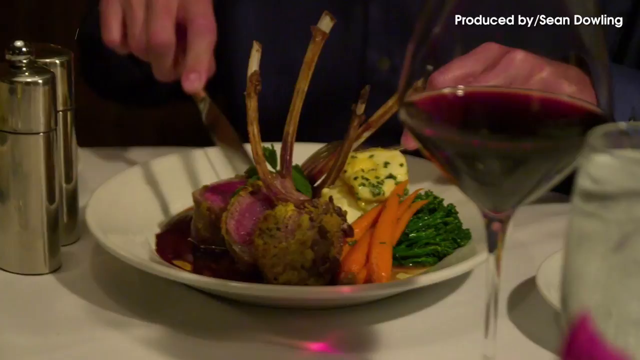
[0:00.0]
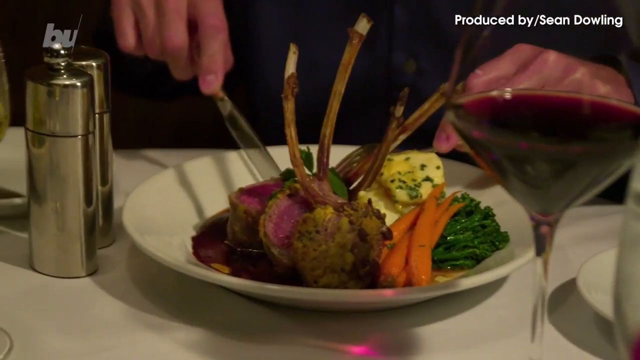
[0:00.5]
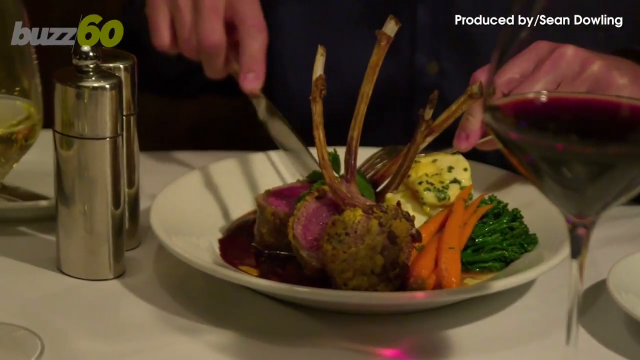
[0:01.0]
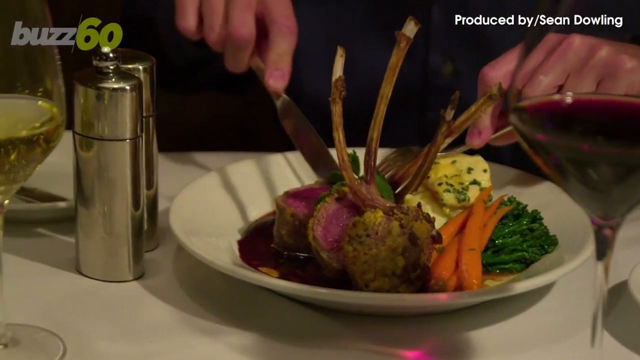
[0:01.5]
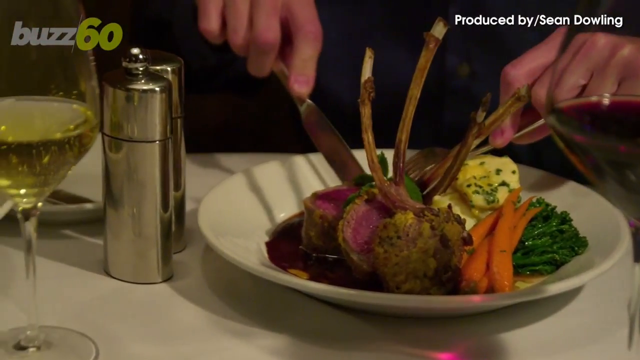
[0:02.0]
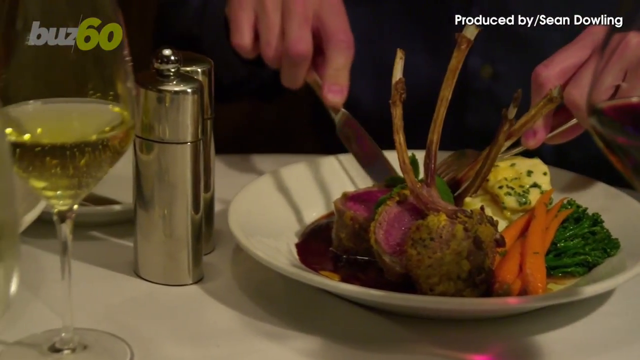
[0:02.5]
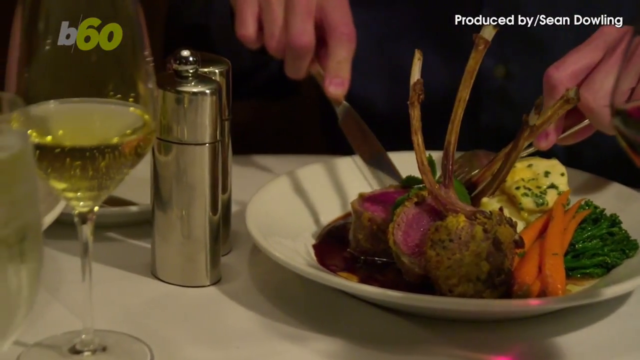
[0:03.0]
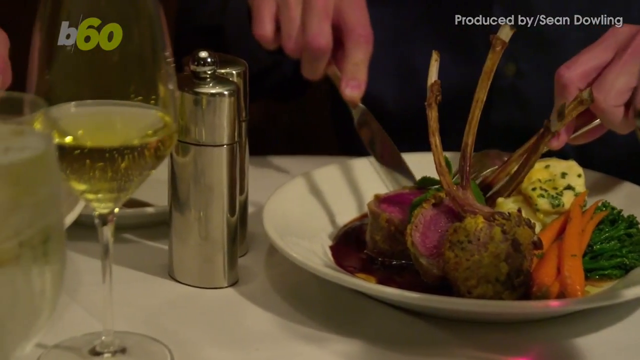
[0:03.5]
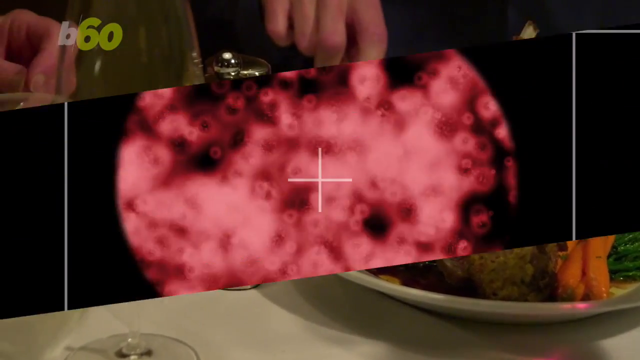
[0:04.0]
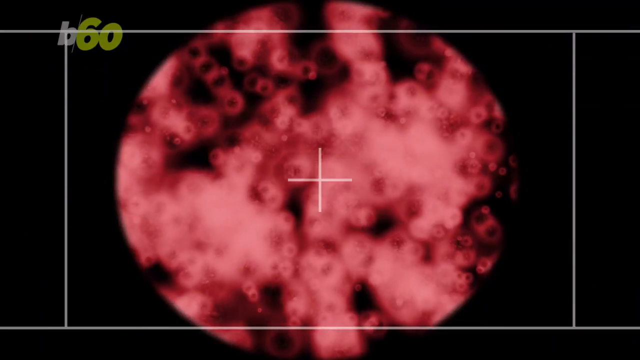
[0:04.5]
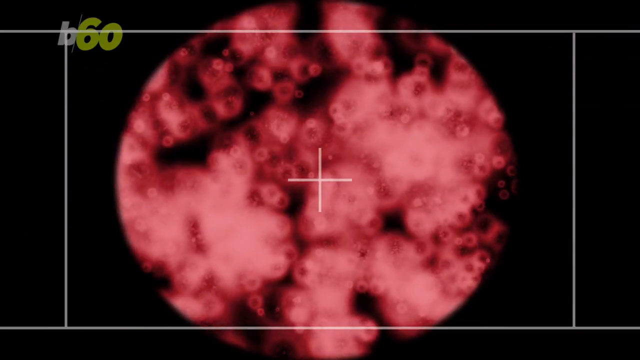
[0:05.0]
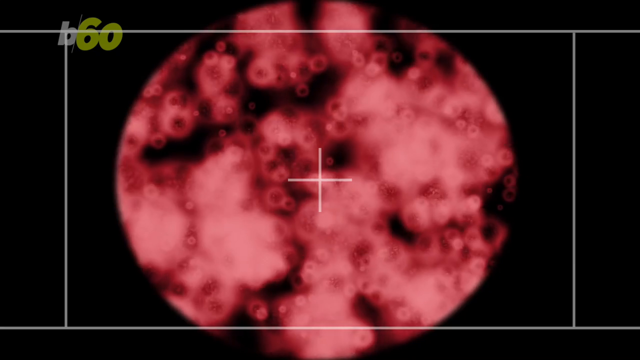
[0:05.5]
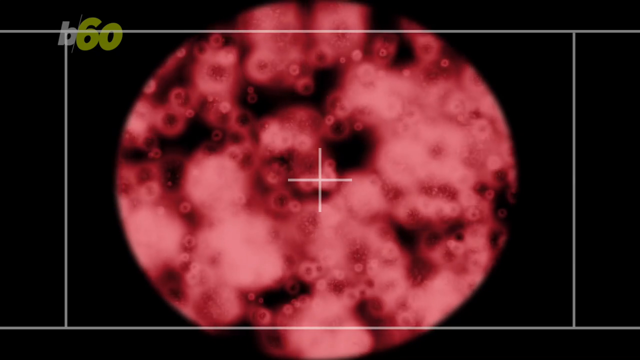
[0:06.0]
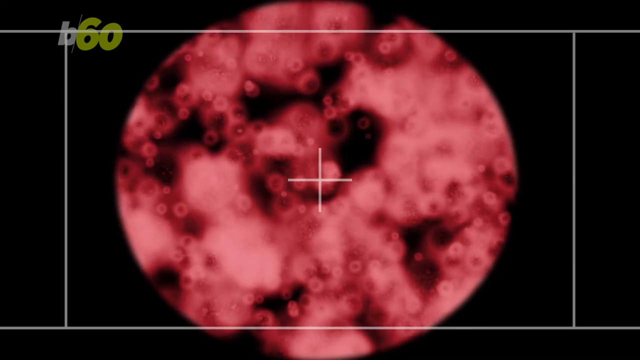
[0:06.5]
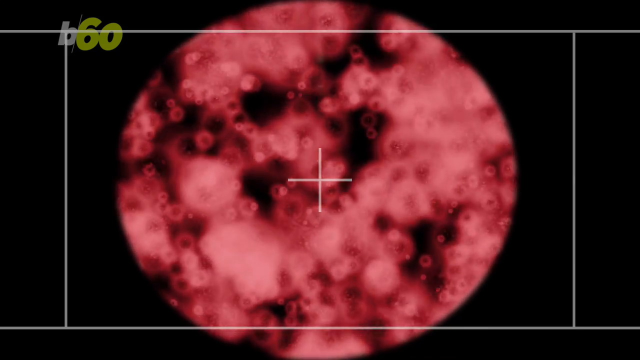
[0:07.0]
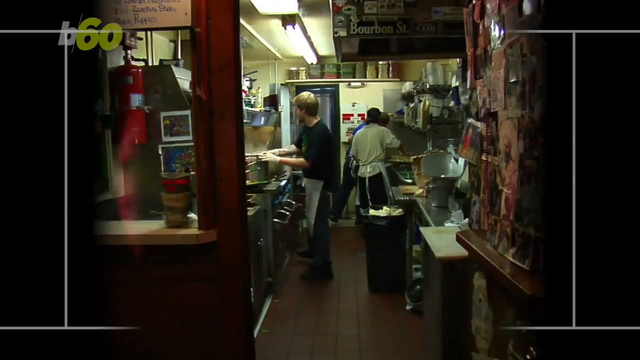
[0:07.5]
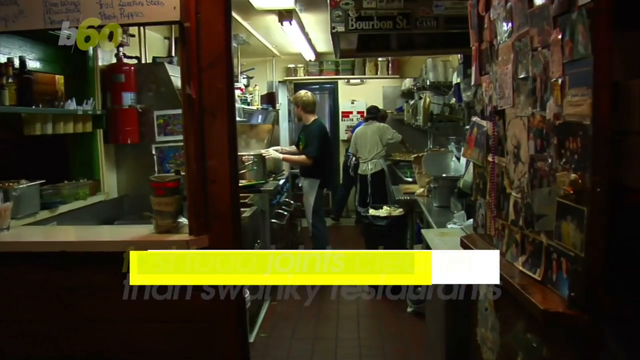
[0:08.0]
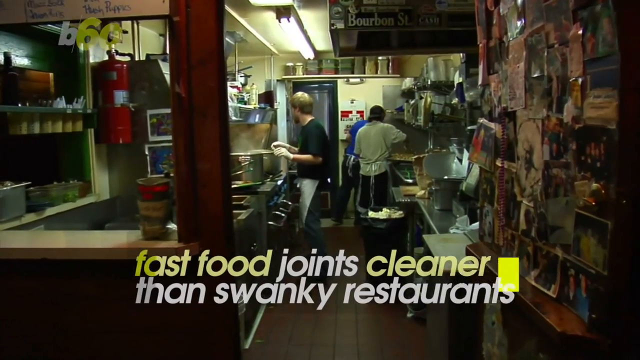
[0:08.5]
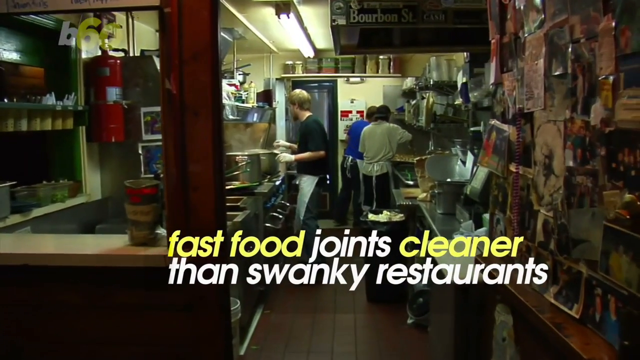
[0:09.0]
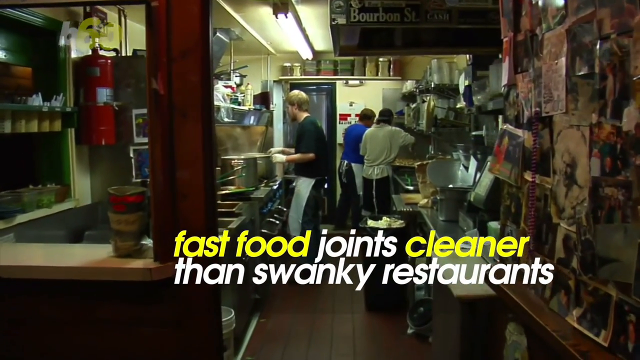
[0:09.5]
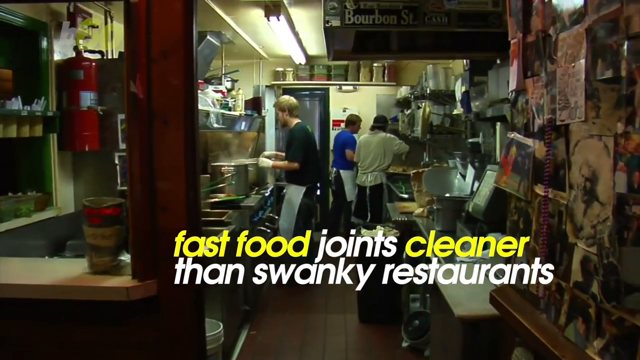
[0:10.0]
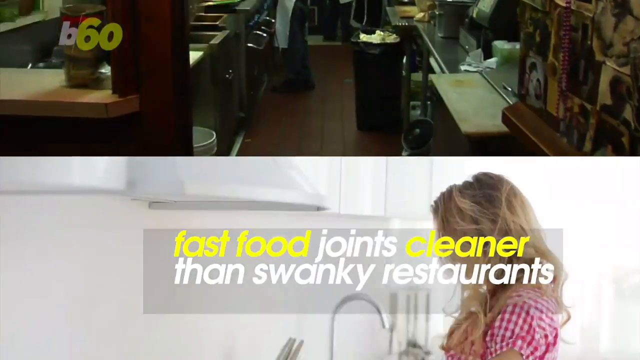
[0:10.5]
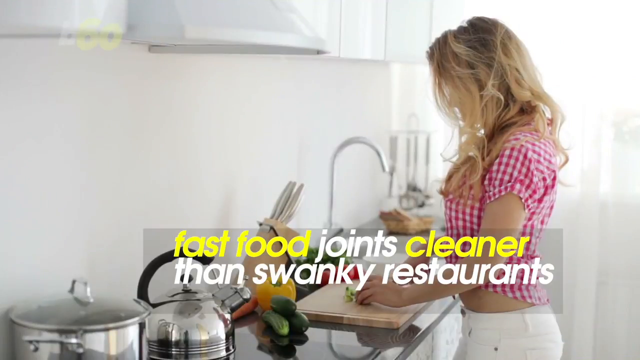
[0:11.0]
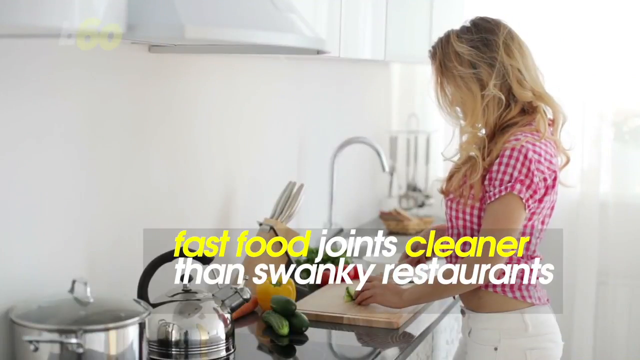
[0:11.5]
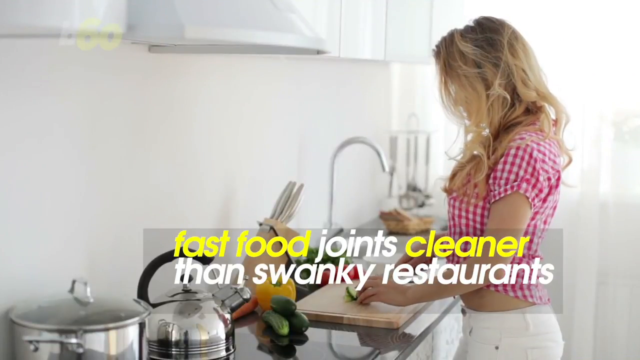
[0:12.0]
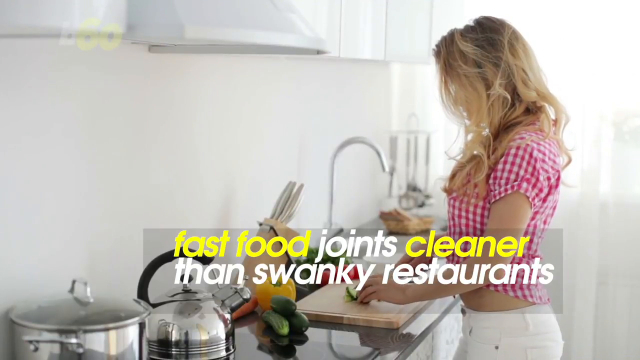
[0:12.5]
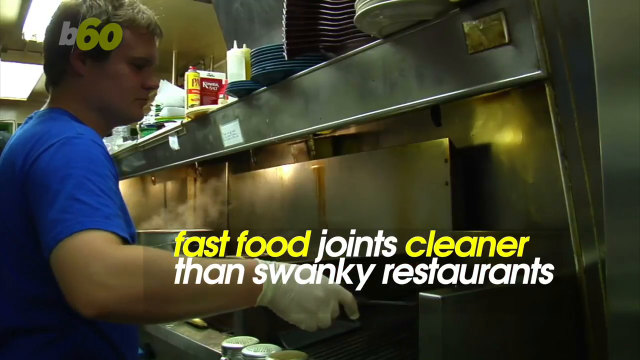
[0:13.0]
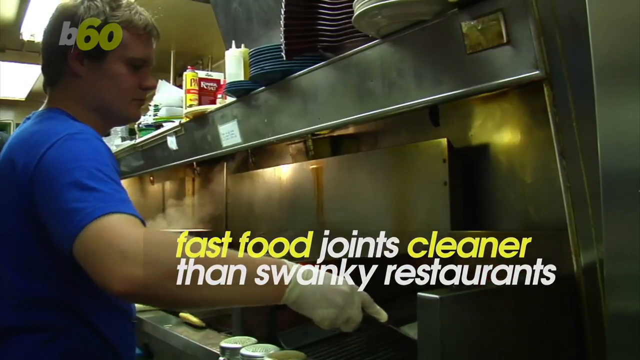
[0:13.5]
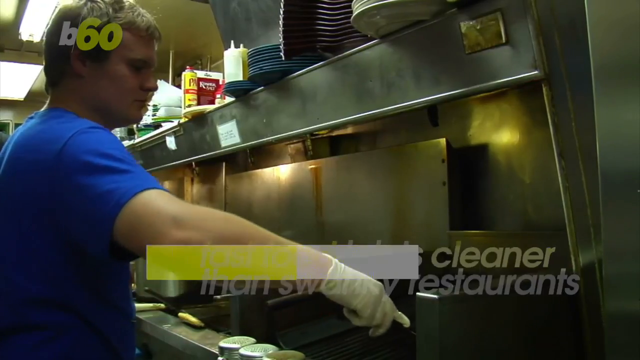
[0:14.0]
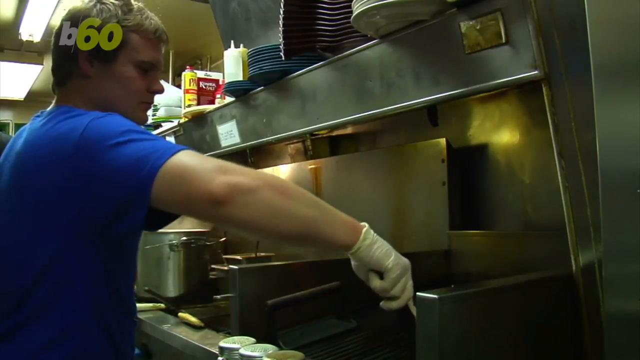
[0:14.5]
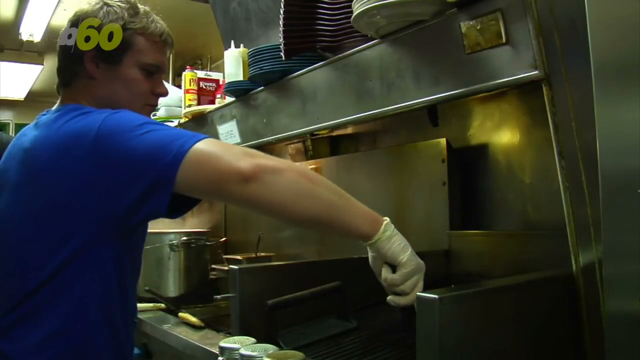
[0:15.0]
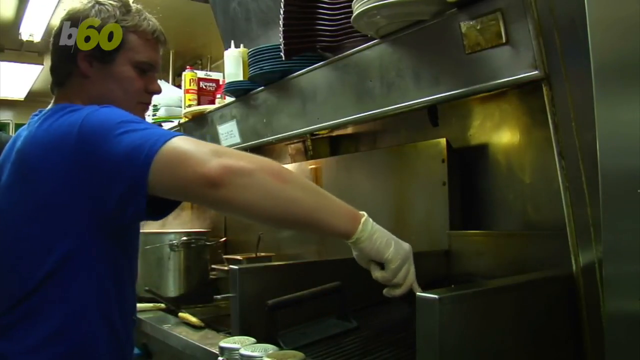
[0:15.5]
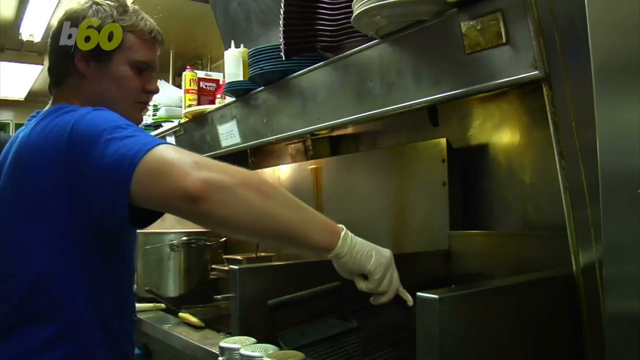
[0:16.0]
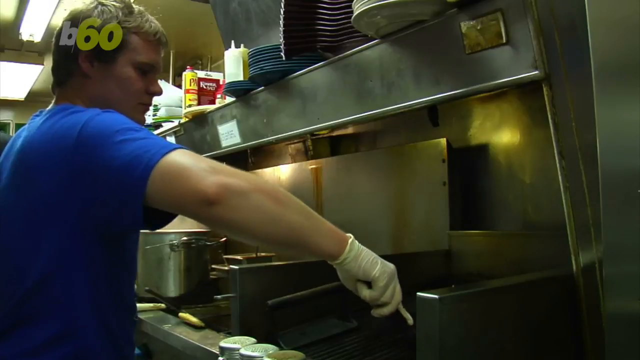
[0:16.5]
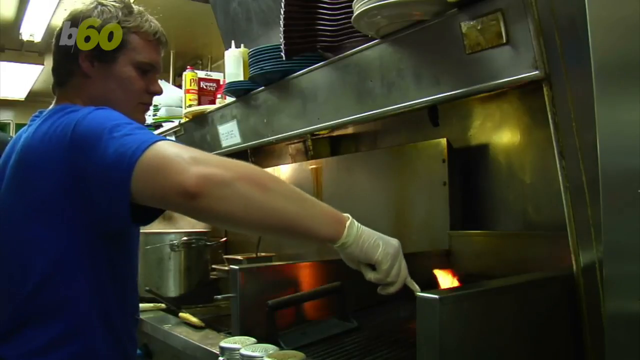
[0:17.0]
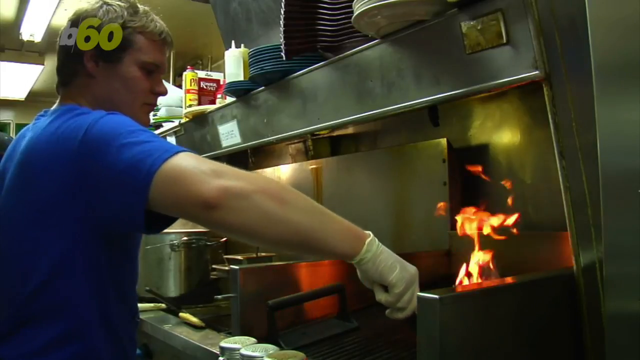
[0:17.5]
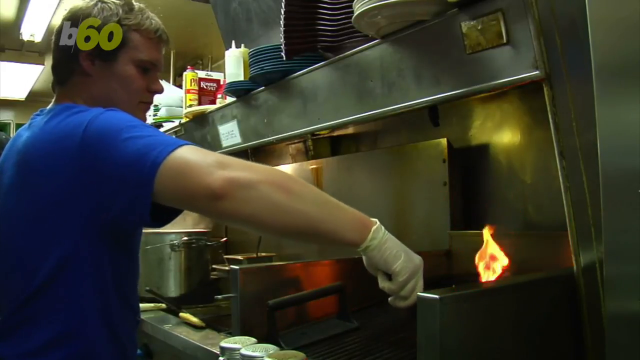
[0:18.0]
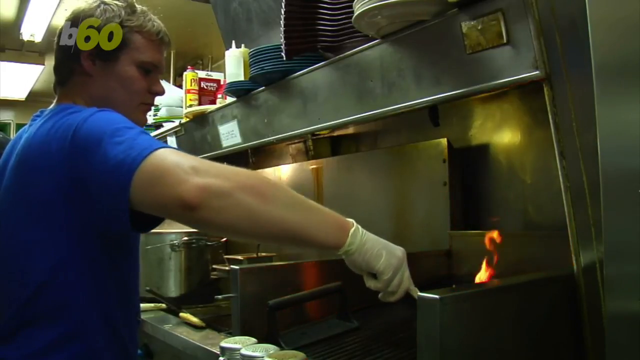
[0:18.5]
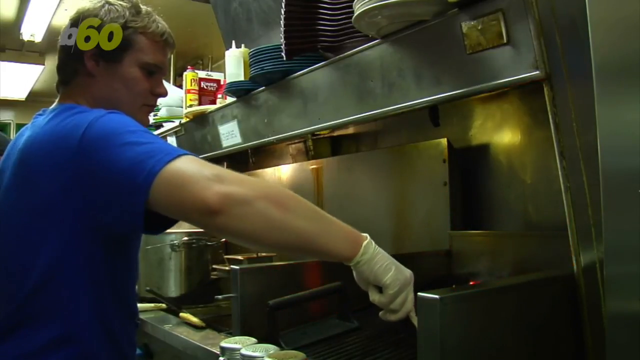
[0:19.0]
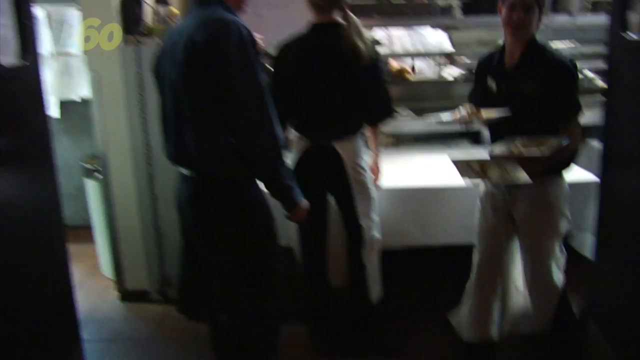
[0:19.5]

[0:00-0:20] The name Buzz 60, or B60, appears in the upper left-hand corner, with the video credited as produced by Sean Dowling. A plate holds what looks like some sort of meat on a rib, along with carrots, a green vegetable and a potato; there is also a glass of wine and silver salt and pepper shakers. Next comes a large screen that looks like a microscope screen, showing a cell bubbling in a pink color. The scene opens up to a kitchen with the text "fast food joints cleaner than swanky restaurants" as a chef cooks and other people work in the kitchen. A woman is at the sink in her kitchen, wearing a checkered shirt with white pants, cutting vegetables. A short order cook in a restaurant pounds on meat that is cooking on a flame, and then the fancy meal returns as a person cuts their meat.